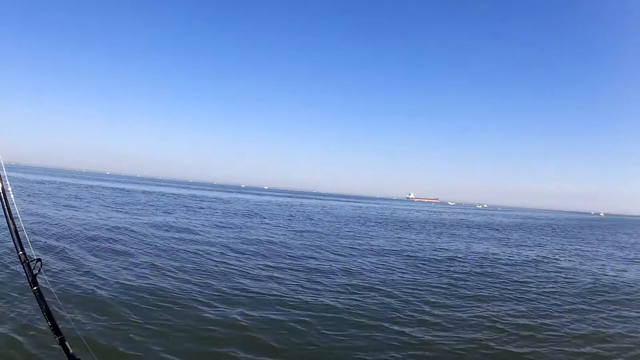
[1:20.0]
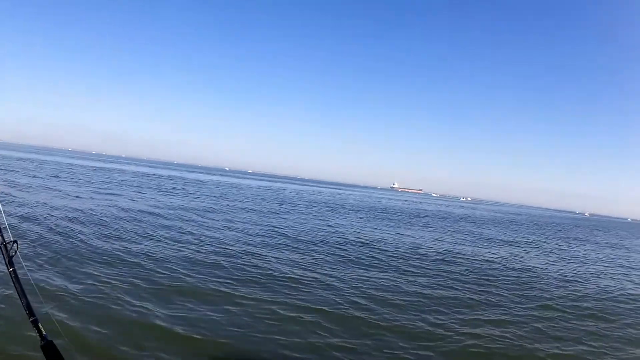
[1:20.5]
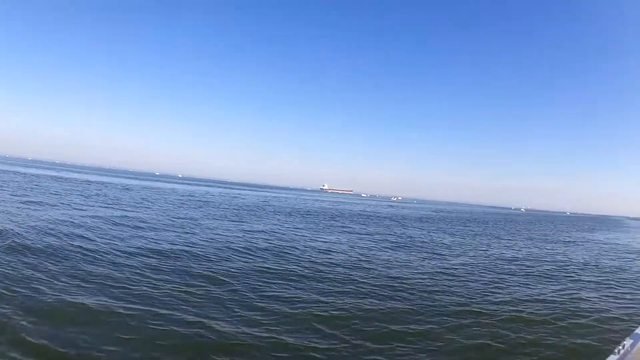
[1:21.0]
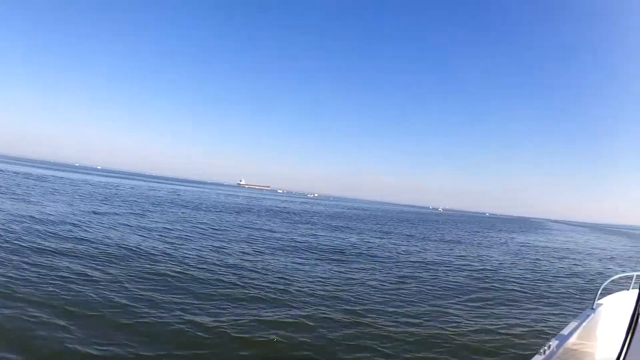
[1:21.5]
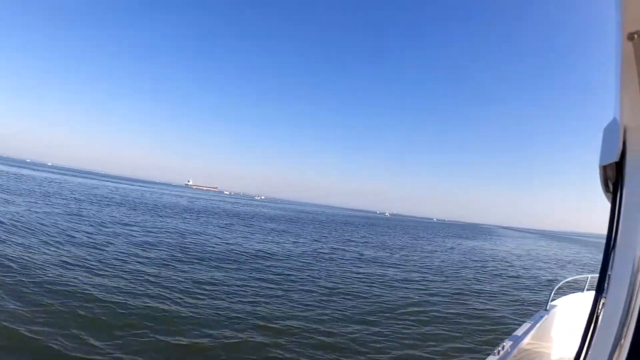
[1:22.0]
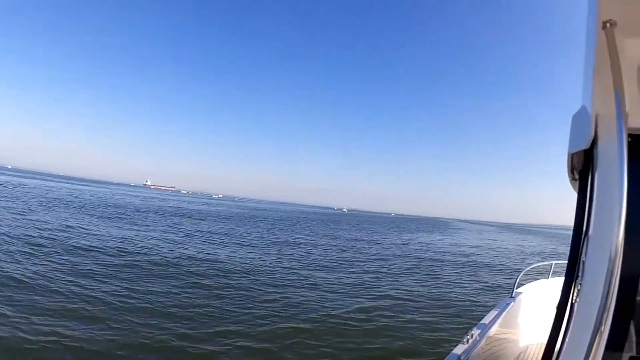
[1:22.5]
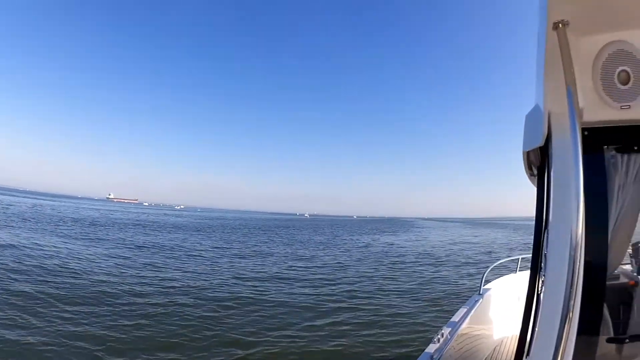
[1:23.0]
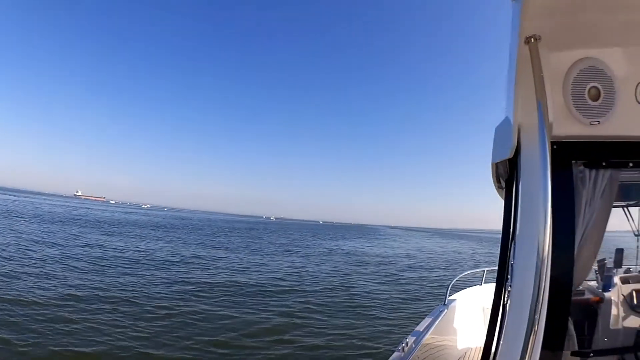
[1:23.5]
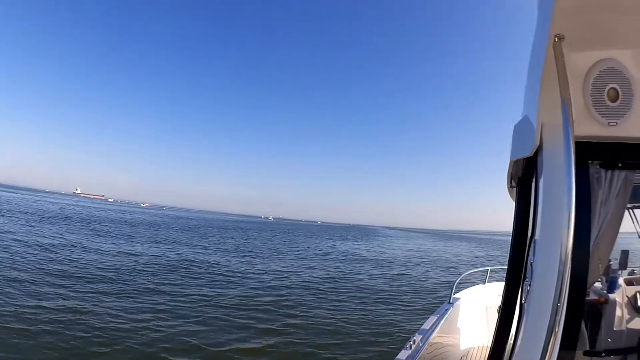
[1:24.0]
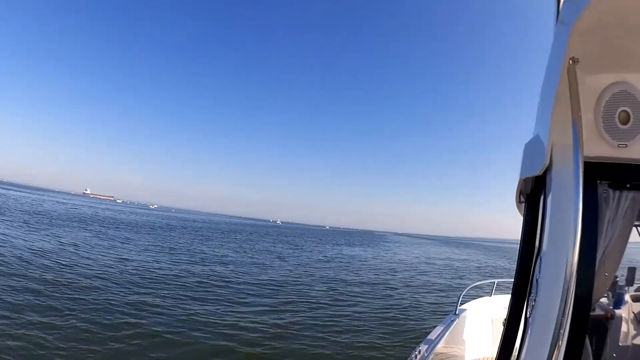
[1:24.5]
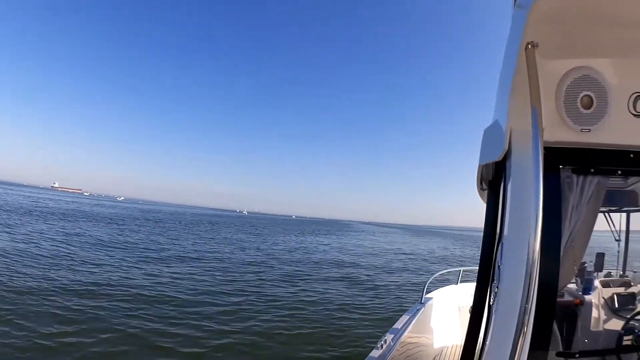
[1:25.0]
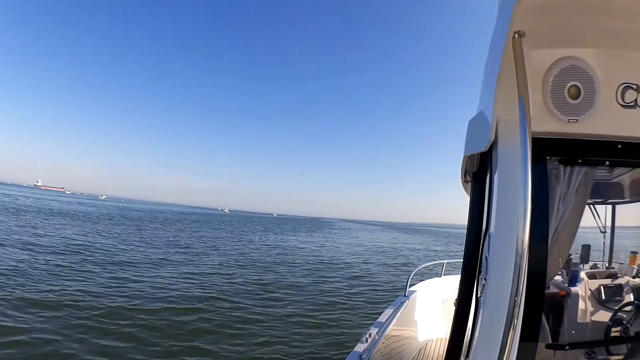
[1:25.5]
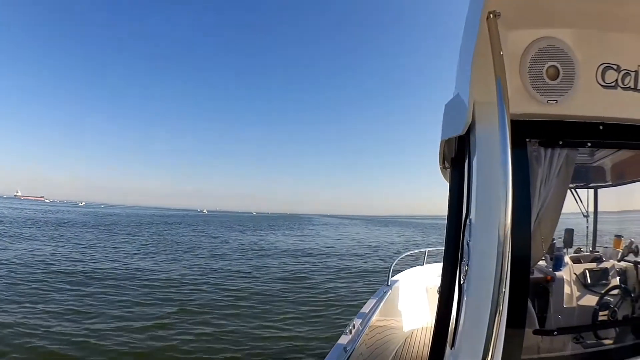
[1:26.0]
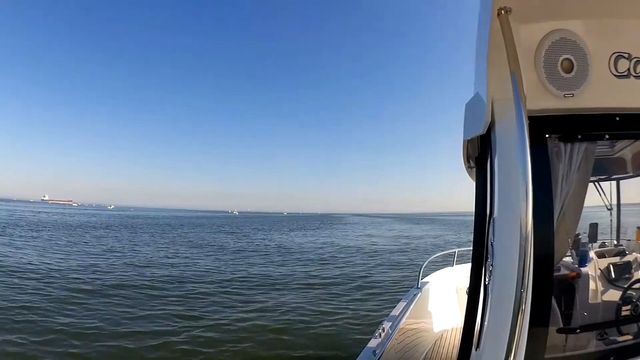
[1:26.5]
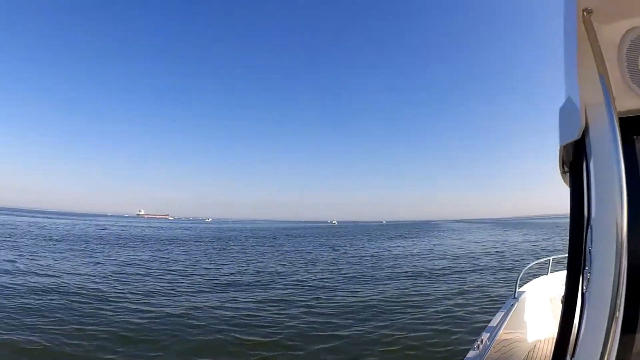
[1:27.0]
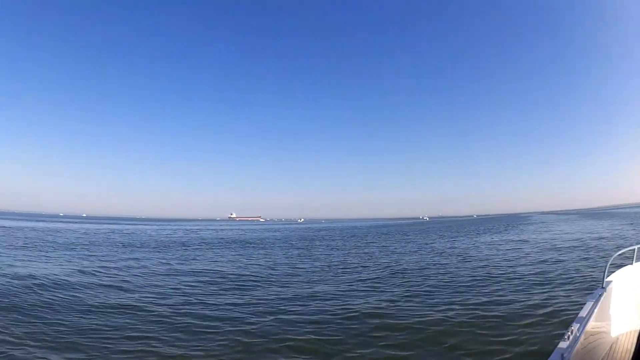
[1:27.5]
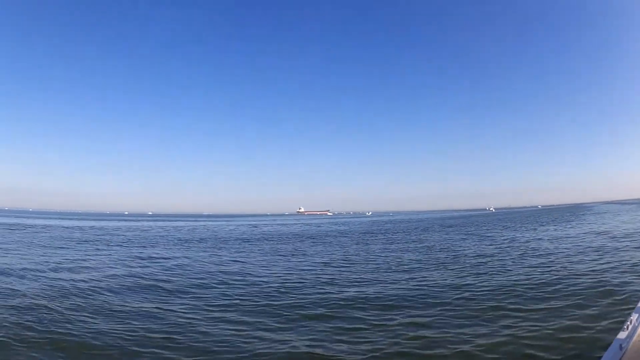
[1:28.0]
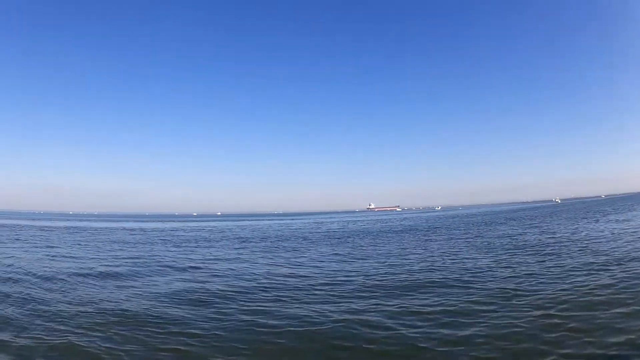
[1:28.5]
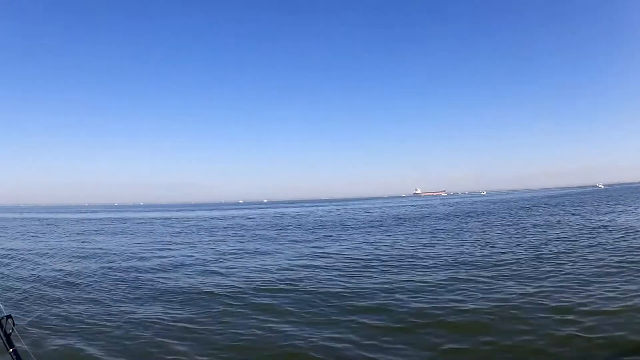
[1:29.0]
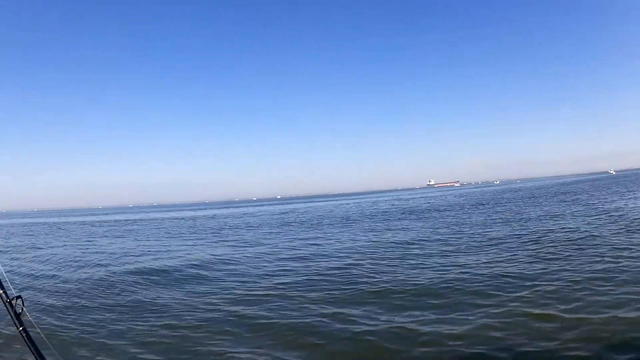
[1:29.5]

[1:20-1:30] The water of the lake or ocean is shown, with part of the boat visible on the right-hand side for part of the shot. At the very beginning the view is mostly ocean, with what looks like there might be a ship in the distance. The camera pans over to show some of the boat on the right-hand side, only partly visible: the wall and a little of the boat's inside. The video then pans back to show all ocean. On the left-hand side there appears to be a black line that could be one of the fishing poles in the water.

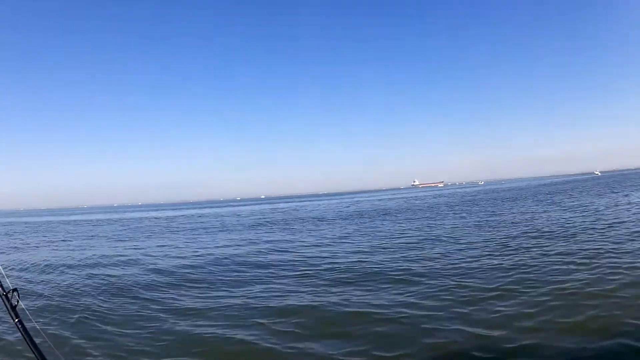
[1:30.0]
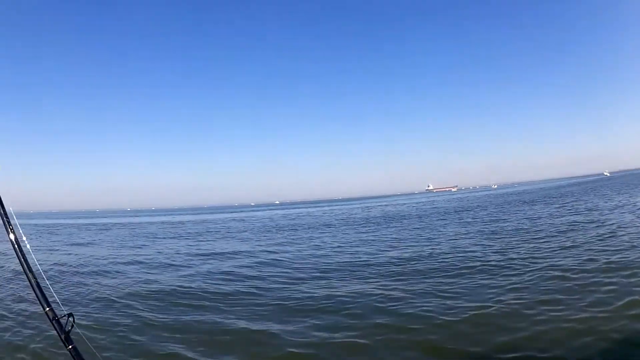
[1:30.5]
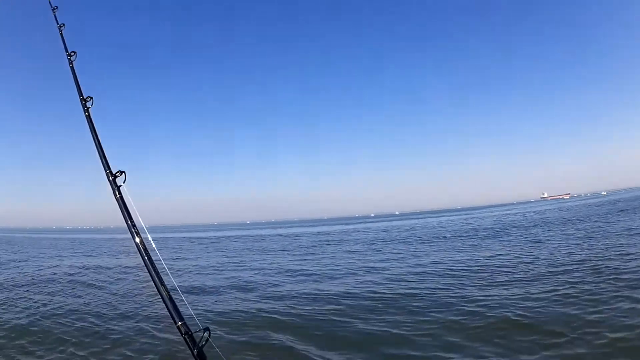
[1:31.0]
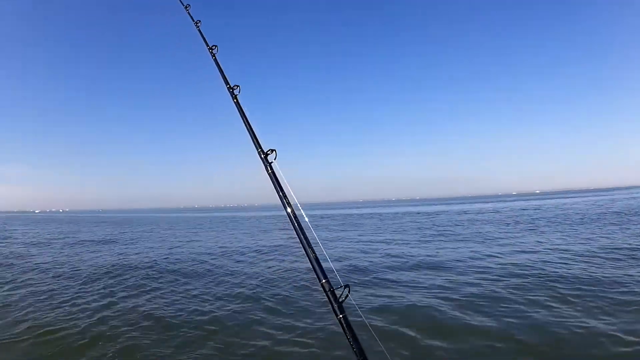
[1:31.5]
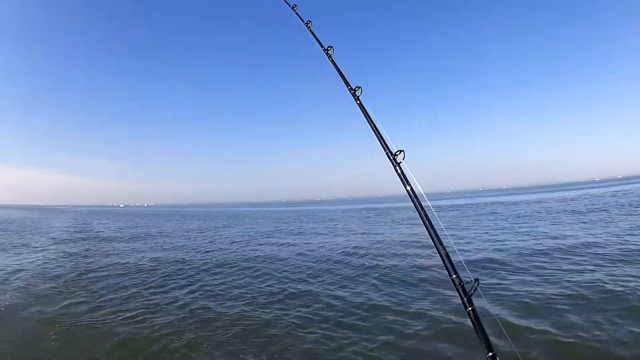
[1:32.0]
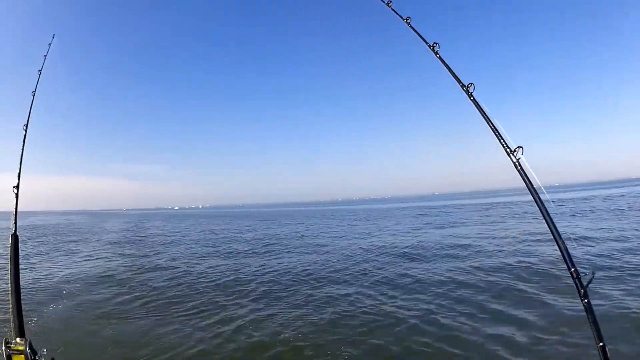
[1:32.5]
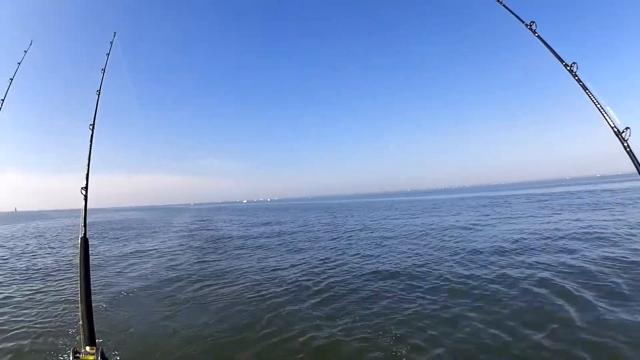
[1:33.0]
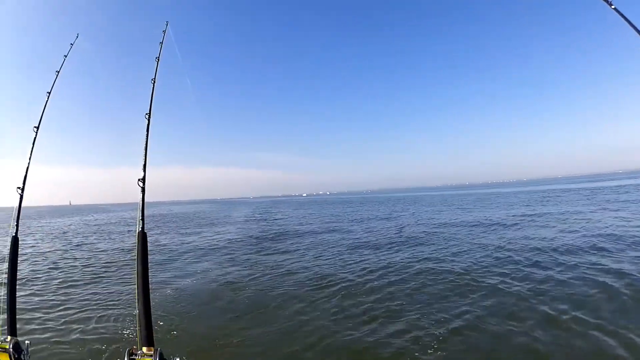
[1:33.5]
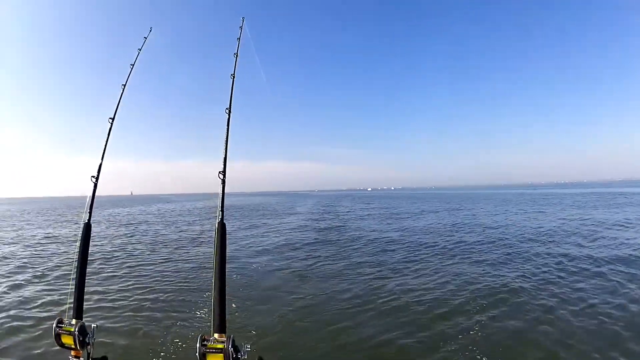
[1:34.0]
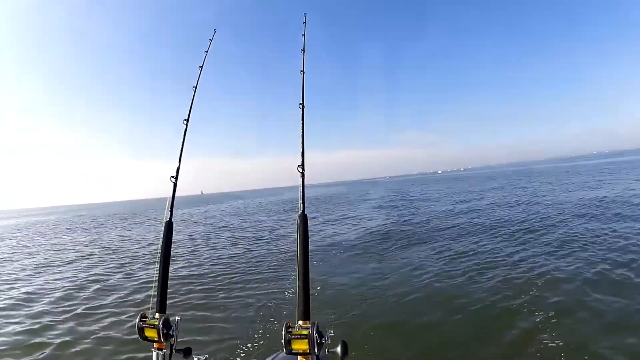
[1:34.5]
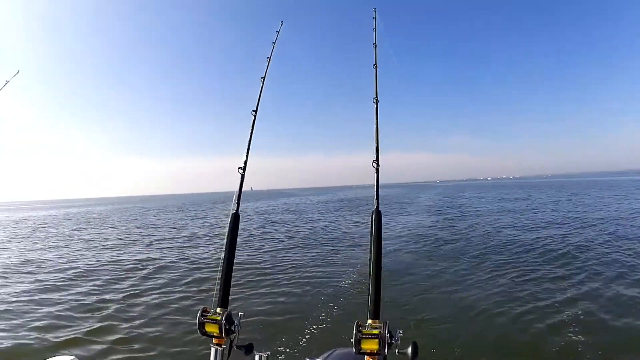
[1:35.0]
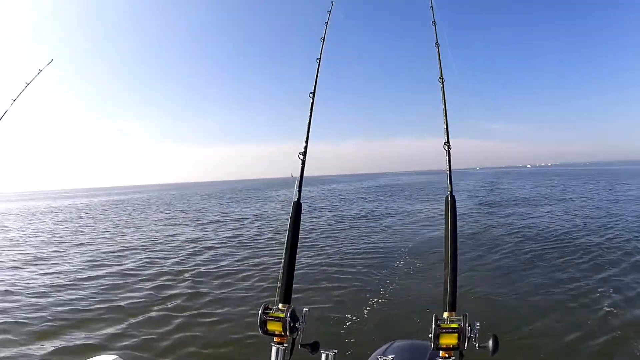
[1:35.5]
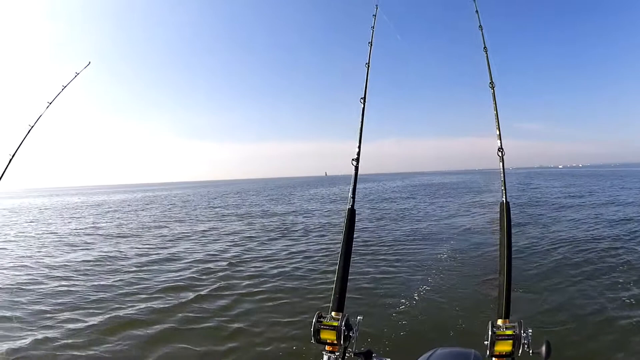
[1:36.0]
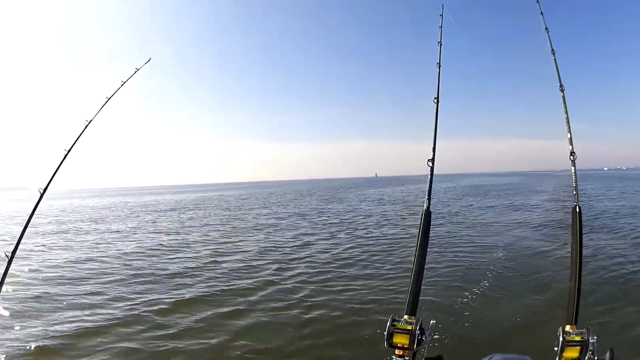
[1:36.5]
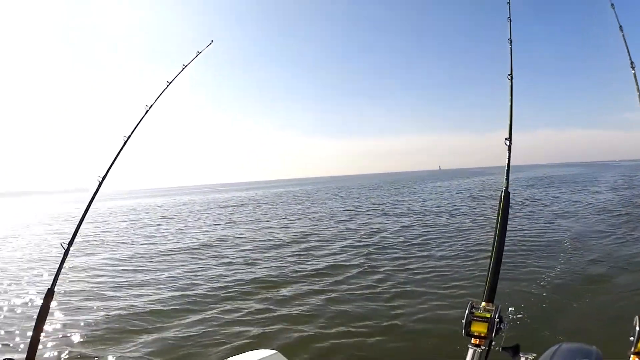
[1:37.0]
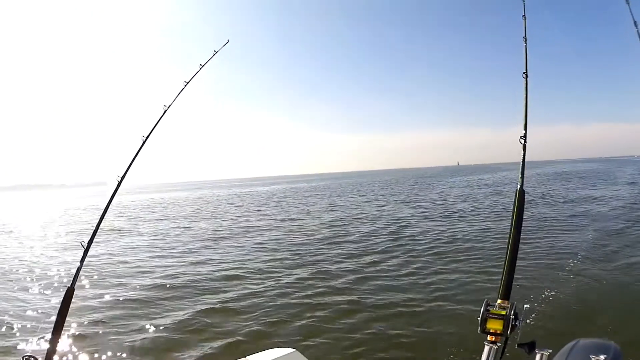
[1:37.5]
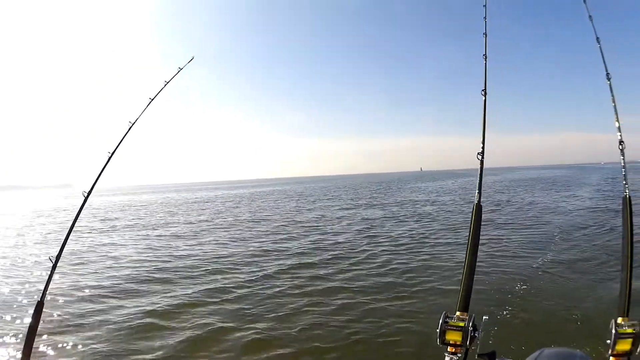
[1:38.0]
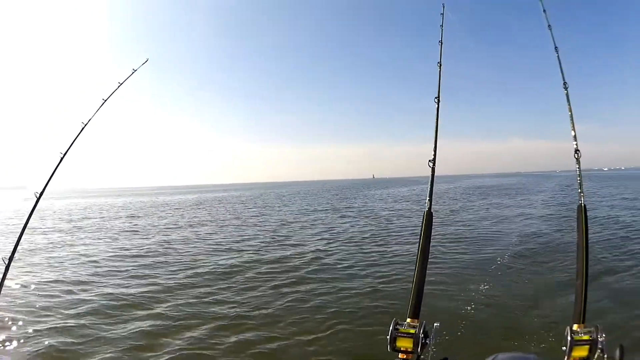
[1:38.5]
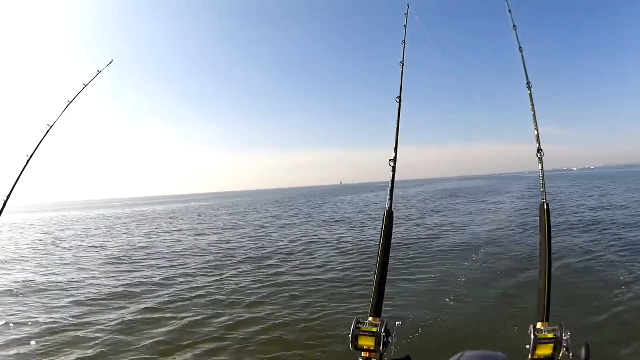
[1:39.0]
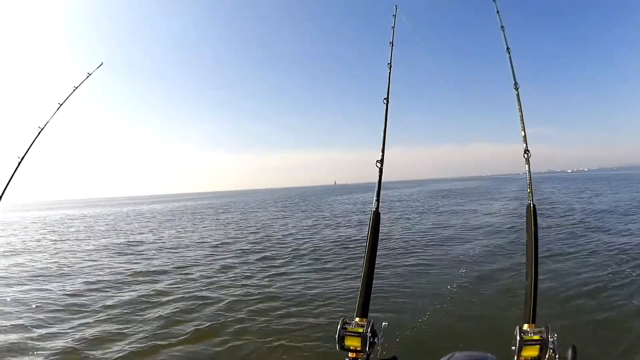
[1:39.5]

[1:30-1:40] A large expanse of the ocean or lake the boat is in is shown. The camera slowly pans from right to left, revealing the different fishing rods that are set up. They appear to be set up on the boat rather than held by people, held instead by contraptions that fit into the boat and onto the rods. The bottoms of the reels are black with a little yellow on them, while the rods themselves are mostly black and silver.